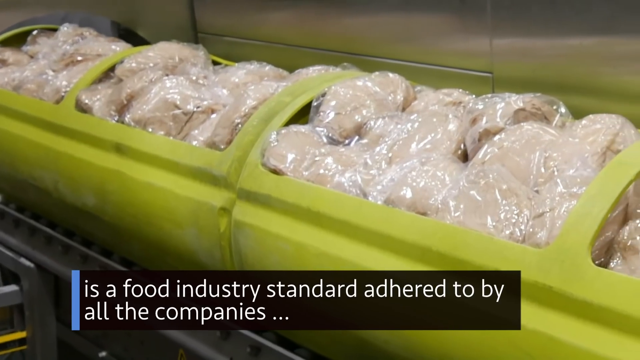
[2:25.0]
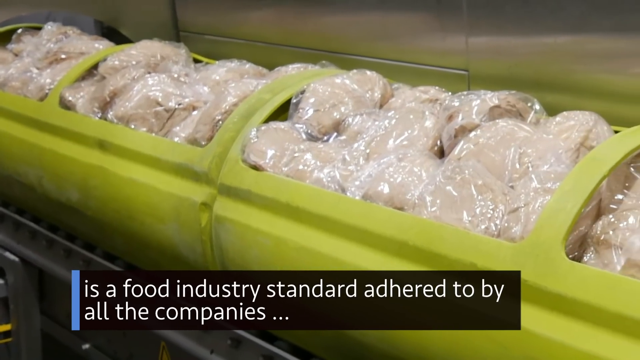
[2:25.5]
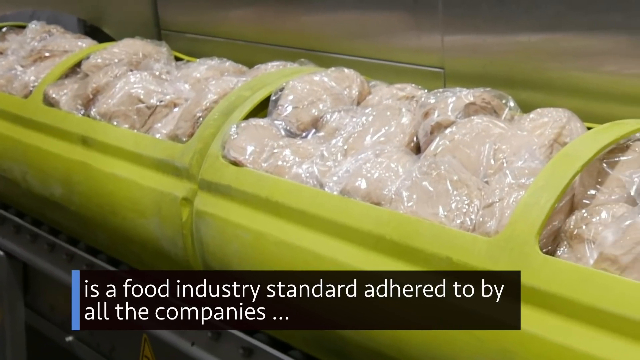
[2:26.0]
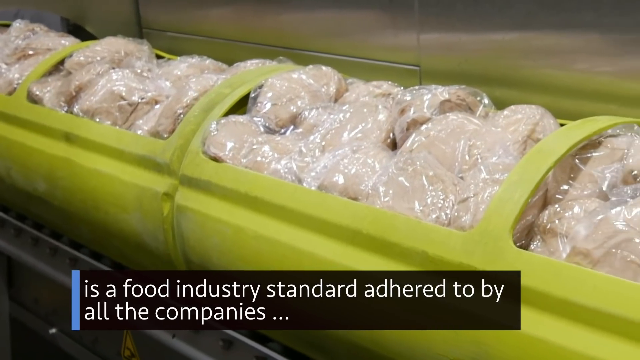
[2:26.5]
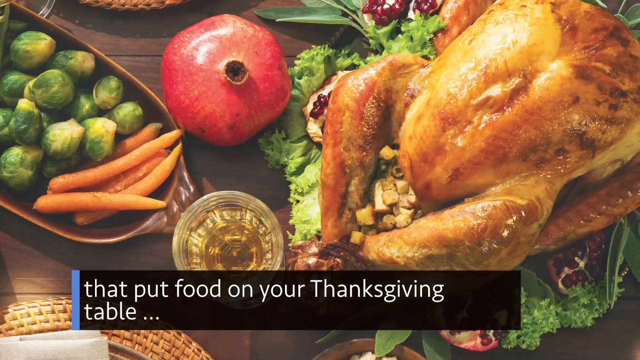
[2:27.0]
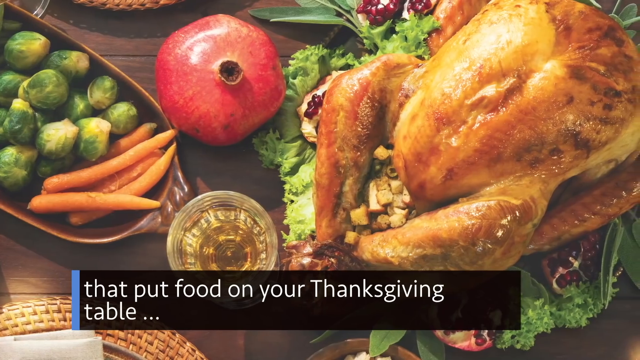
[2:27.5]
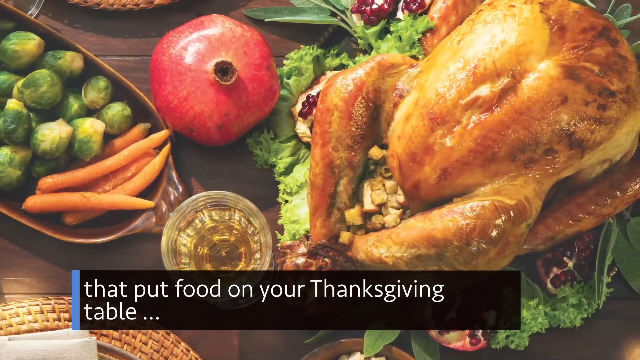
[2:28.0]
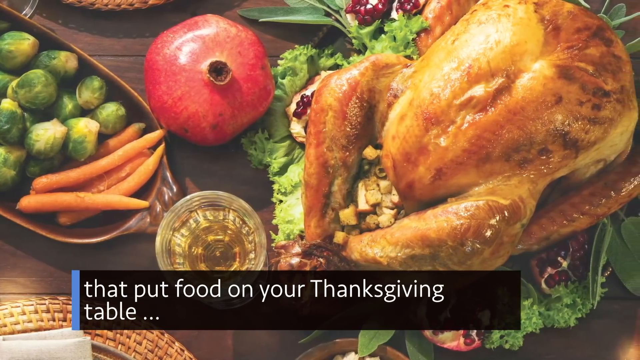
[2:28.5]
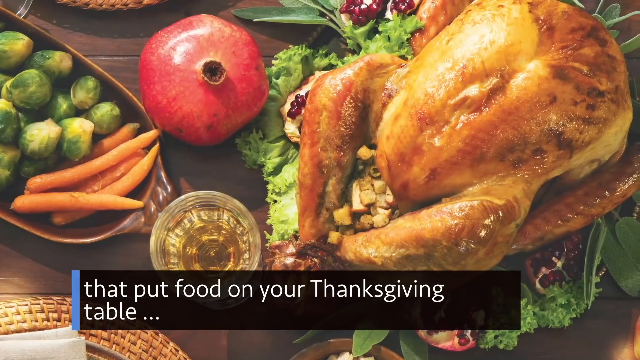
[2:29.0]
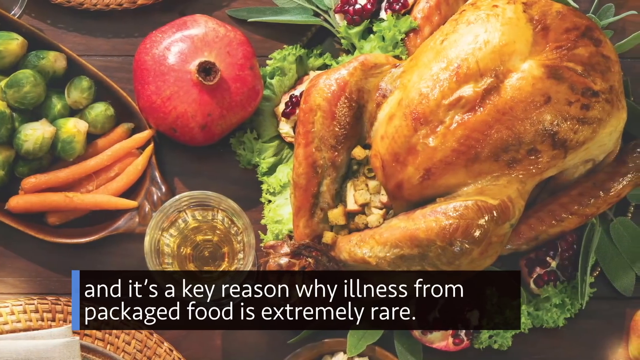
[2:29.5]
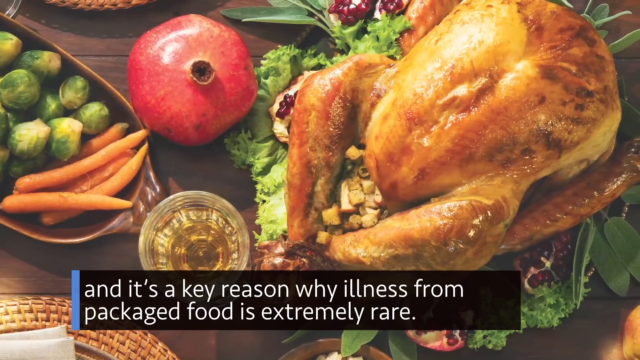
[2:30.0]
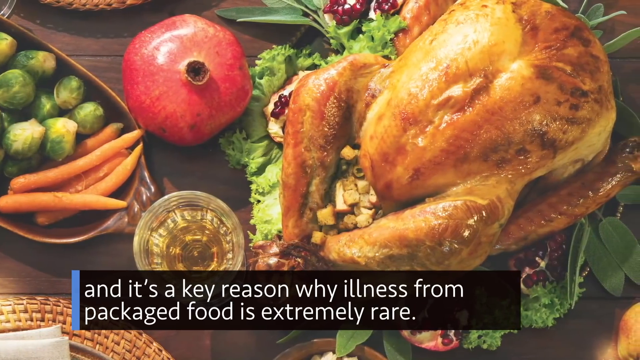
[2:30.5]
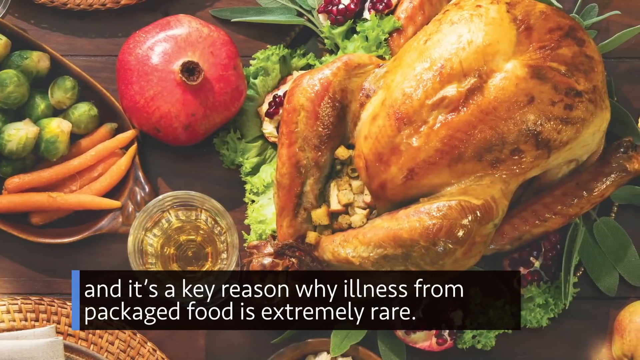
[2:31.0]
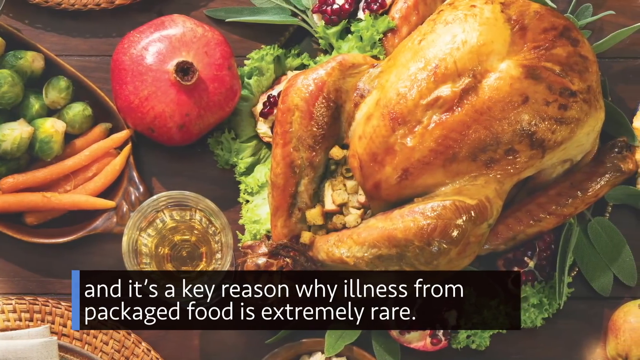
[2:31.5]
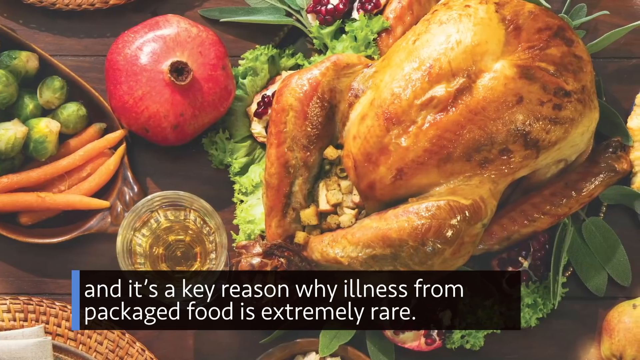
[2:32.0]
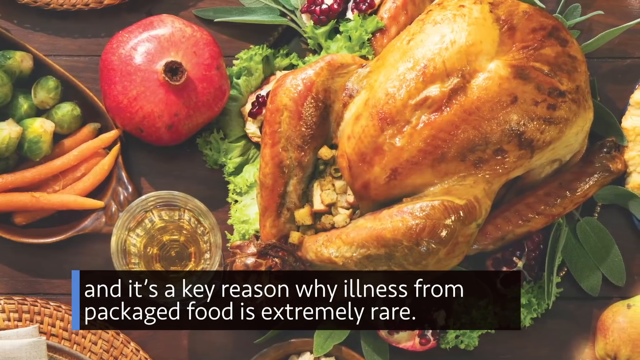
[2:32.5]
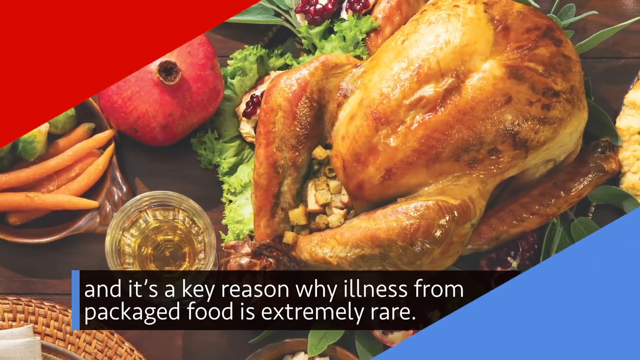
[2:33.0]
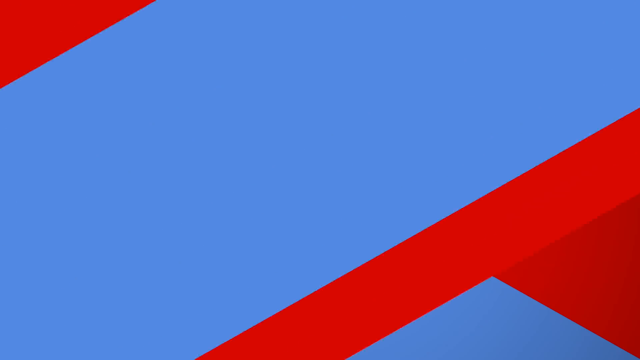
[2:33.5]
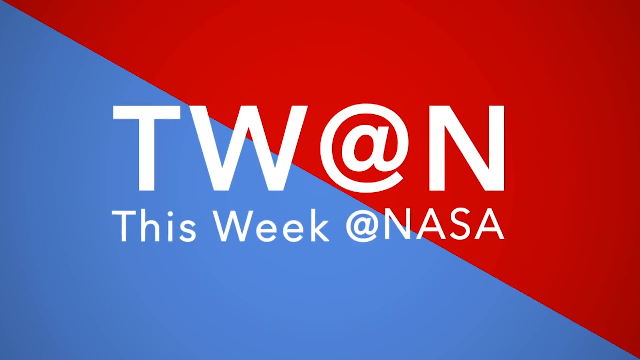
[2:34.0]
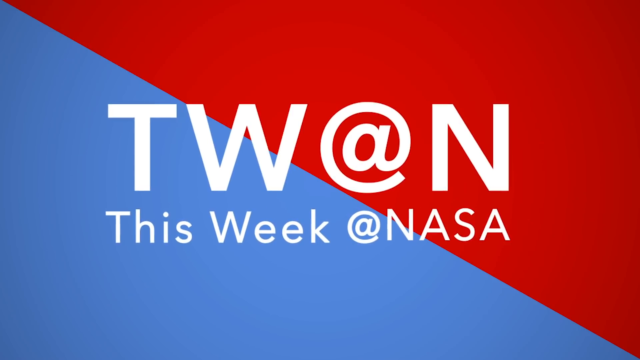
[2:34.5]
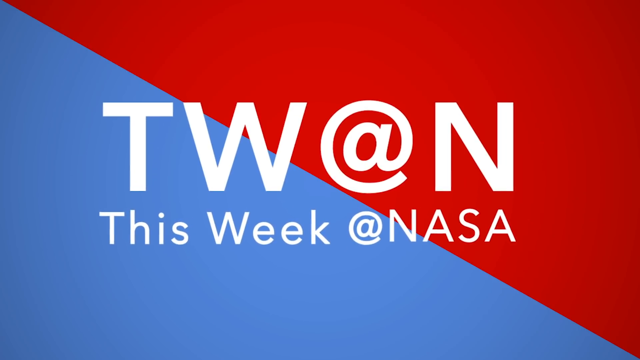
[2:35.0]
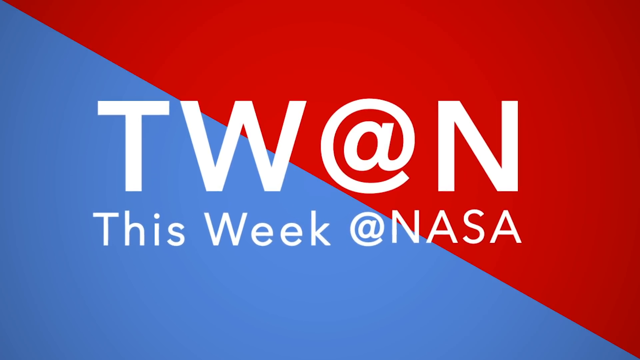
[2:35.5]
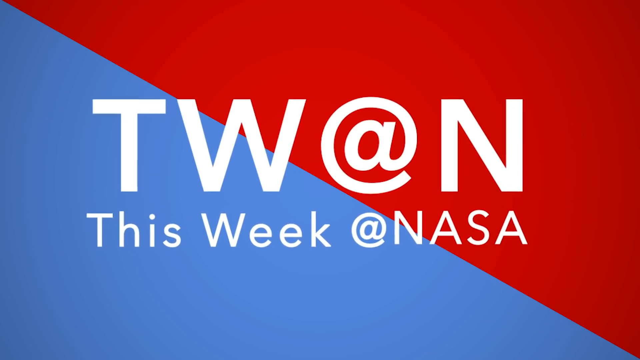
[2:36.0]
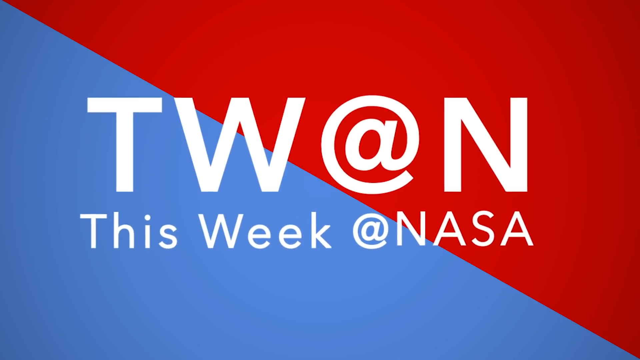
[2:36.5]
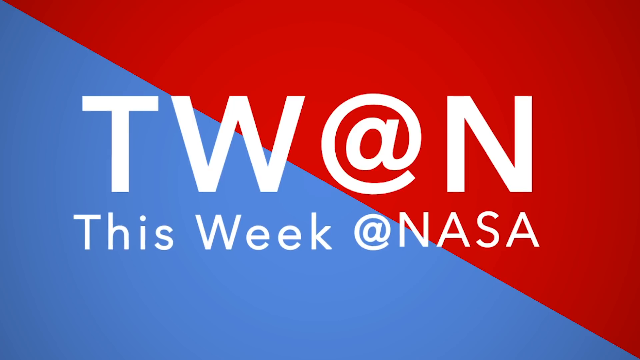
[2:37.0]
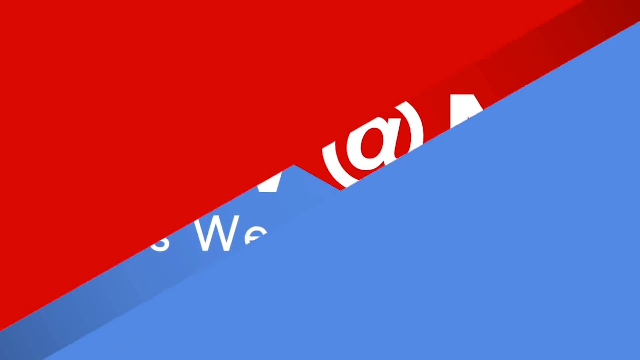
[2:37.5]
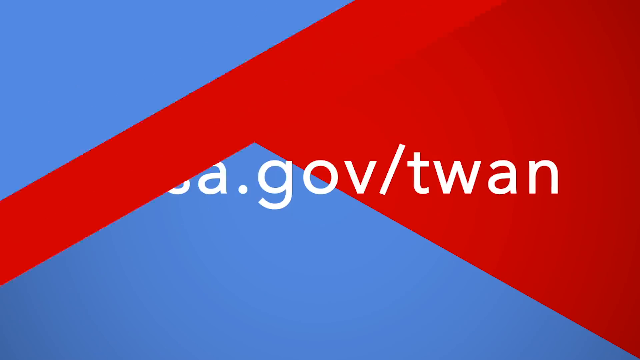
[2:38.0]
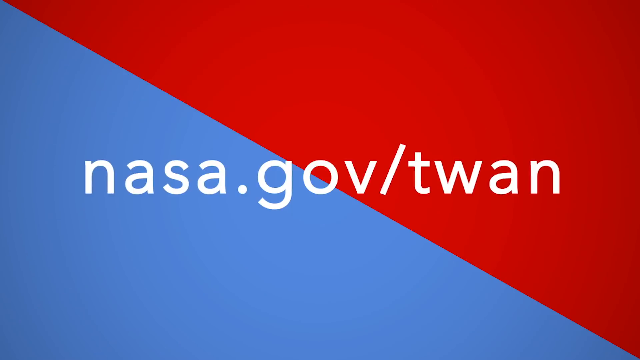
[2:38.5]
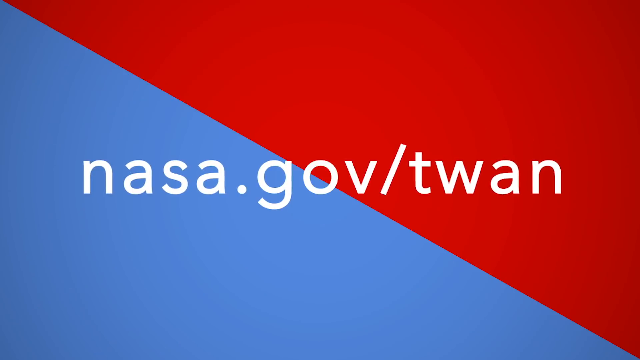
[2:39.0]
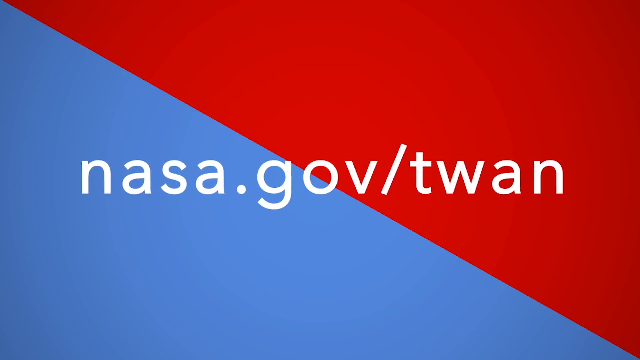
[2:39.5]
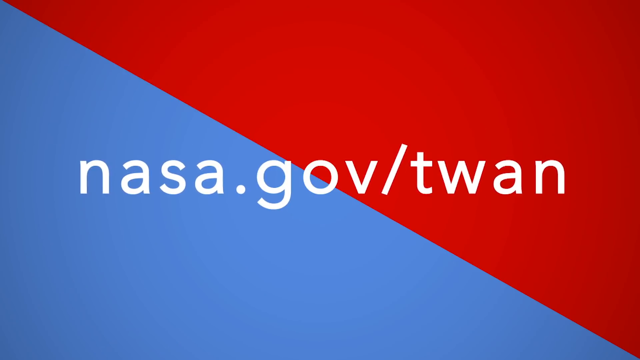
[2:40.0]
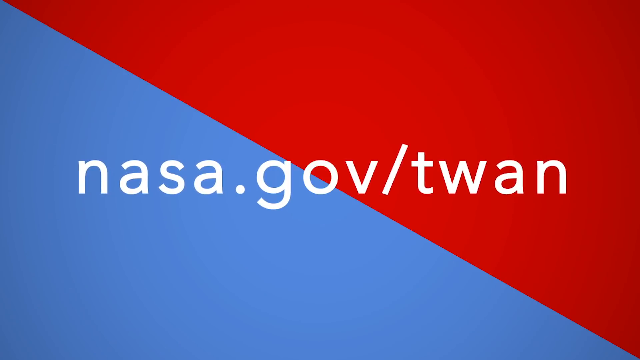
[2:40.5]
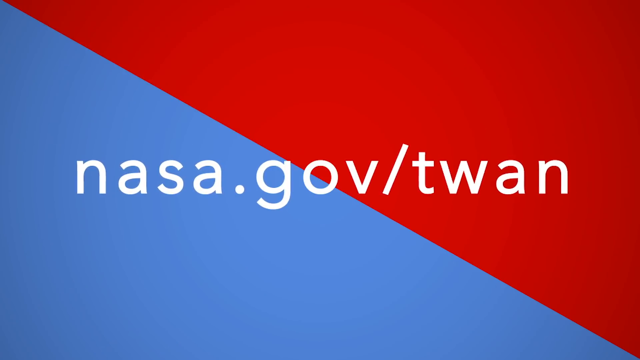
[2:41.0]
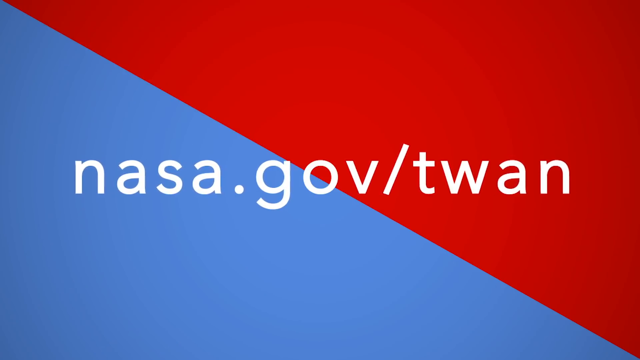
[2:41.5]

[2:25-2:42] The camera pans across a picture of a turkey, a pomegranate and some vegetables. The blue and red screen comes up with "this week at NASA," and the next screen reads "NASA.gov/TWAN."